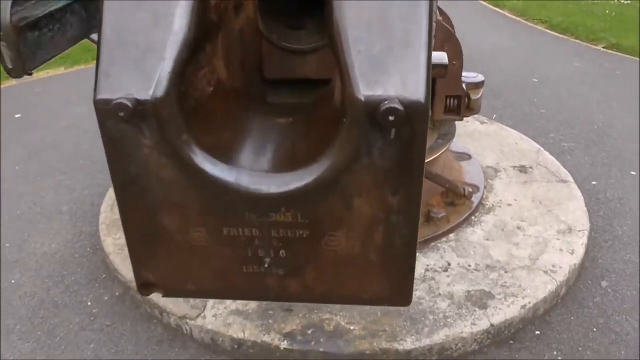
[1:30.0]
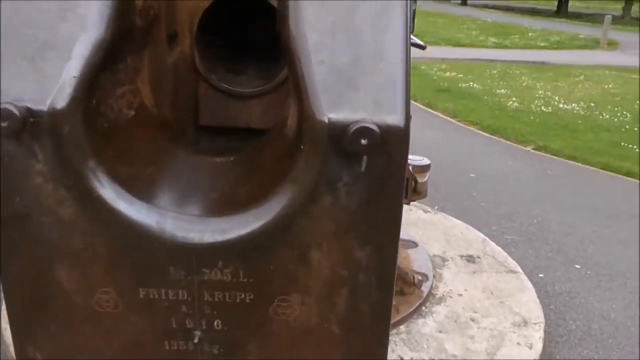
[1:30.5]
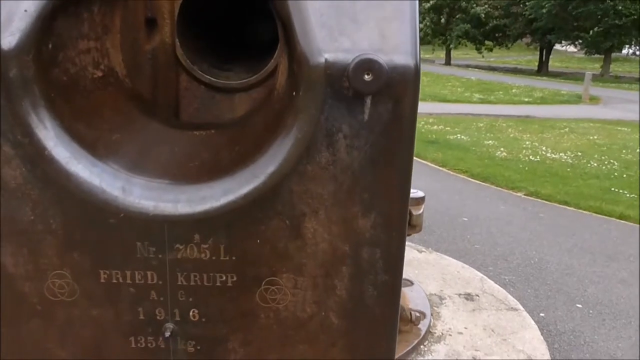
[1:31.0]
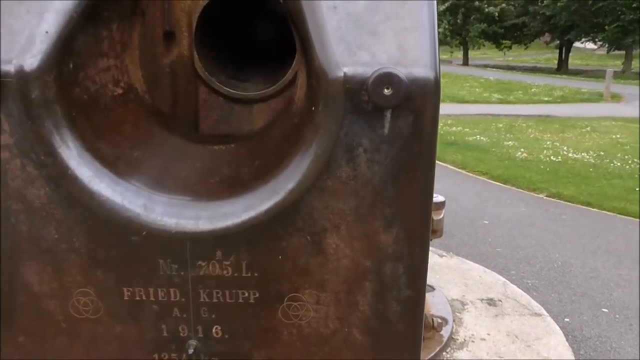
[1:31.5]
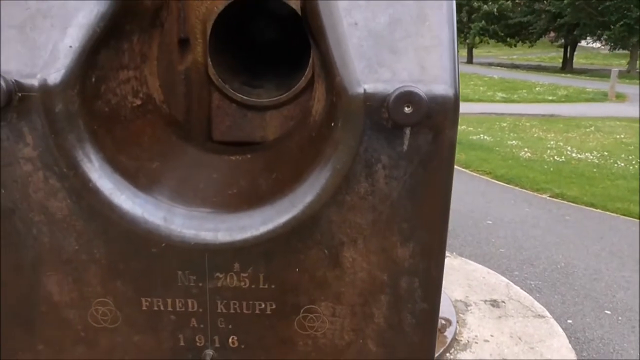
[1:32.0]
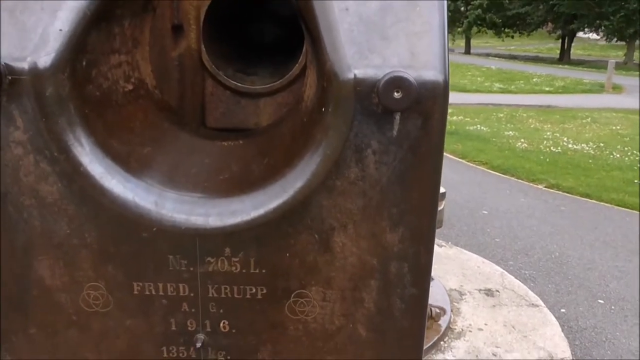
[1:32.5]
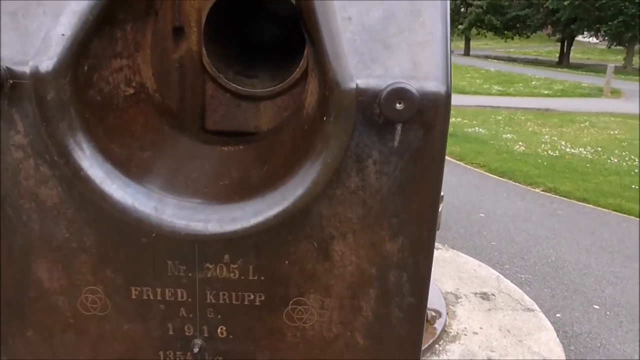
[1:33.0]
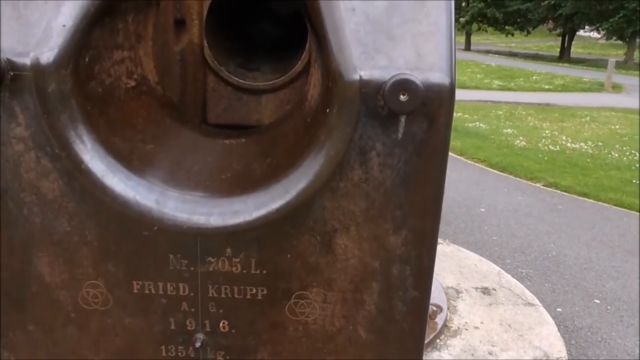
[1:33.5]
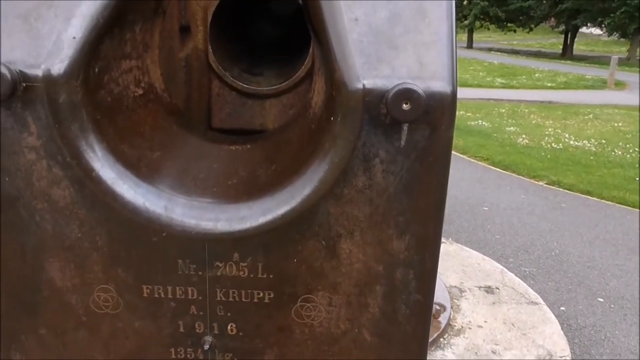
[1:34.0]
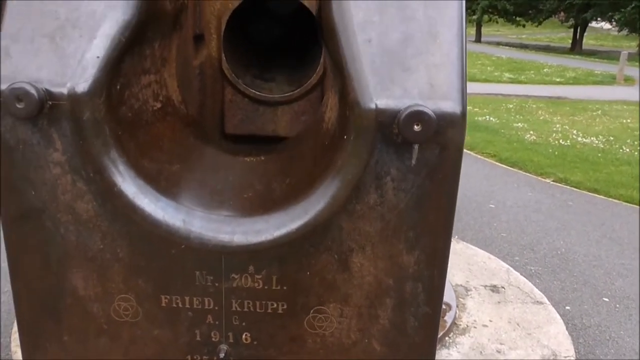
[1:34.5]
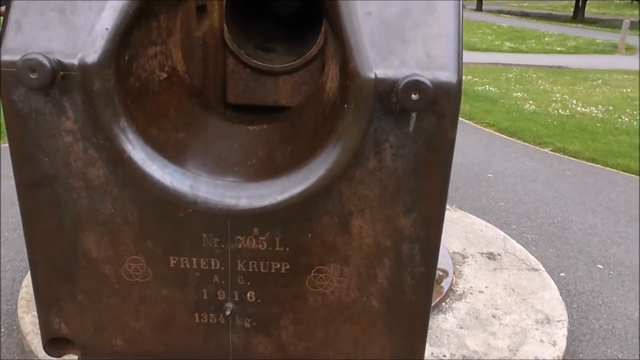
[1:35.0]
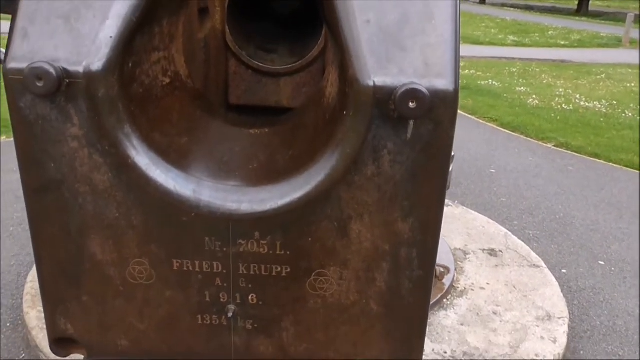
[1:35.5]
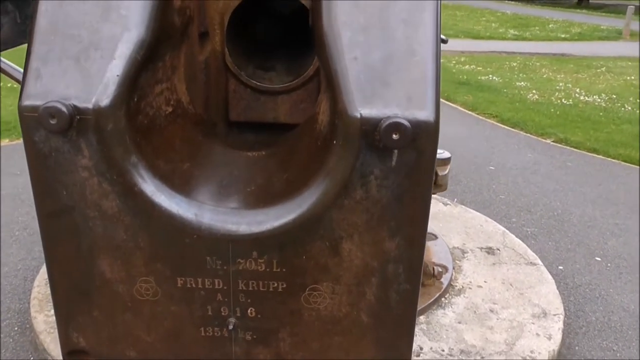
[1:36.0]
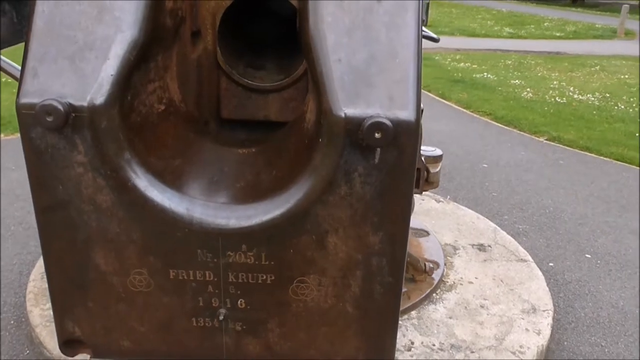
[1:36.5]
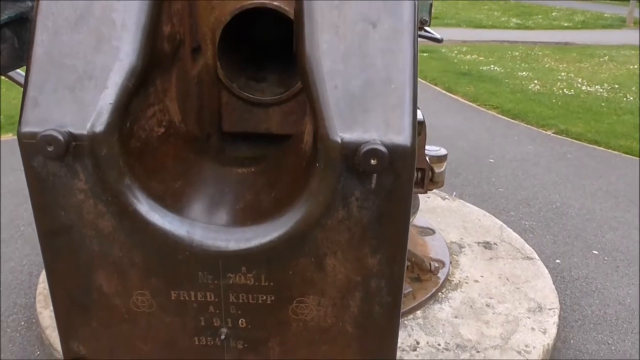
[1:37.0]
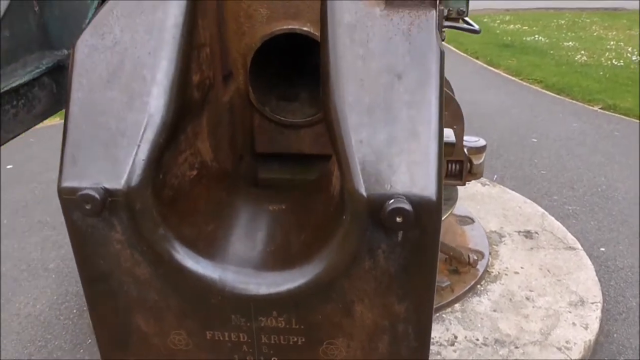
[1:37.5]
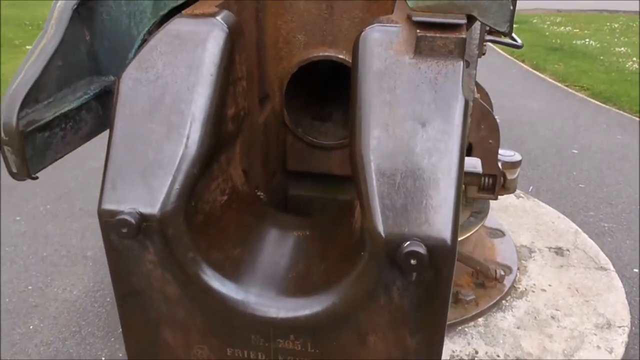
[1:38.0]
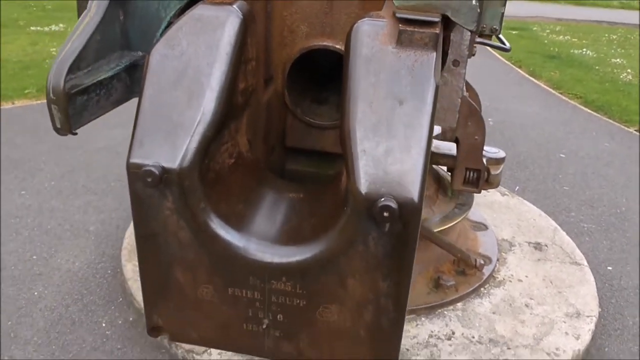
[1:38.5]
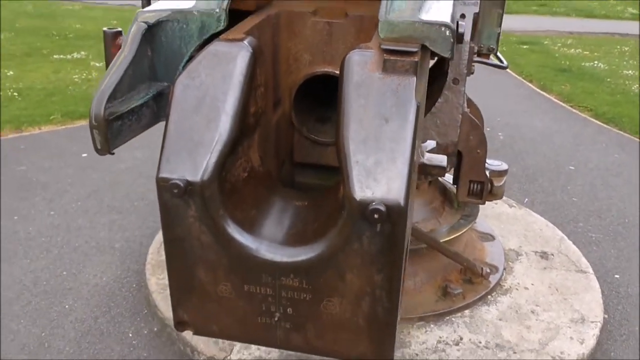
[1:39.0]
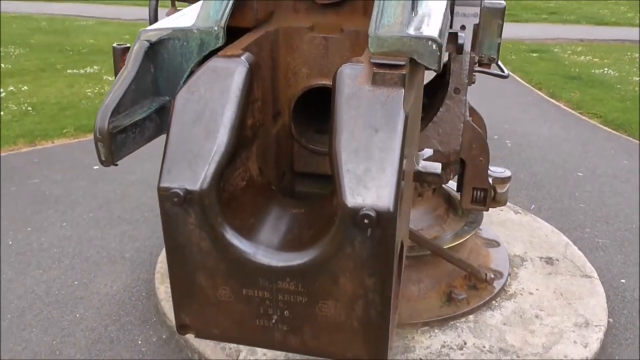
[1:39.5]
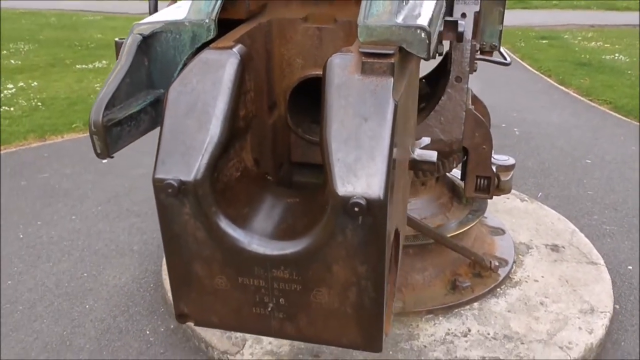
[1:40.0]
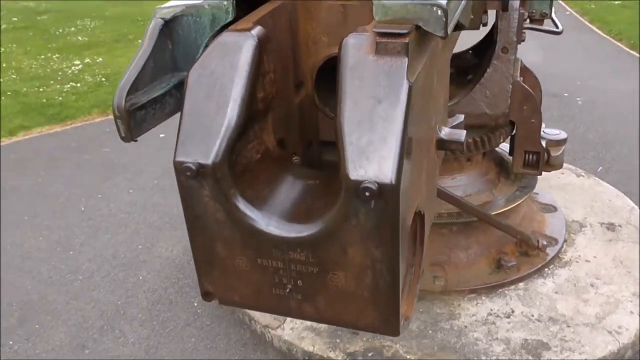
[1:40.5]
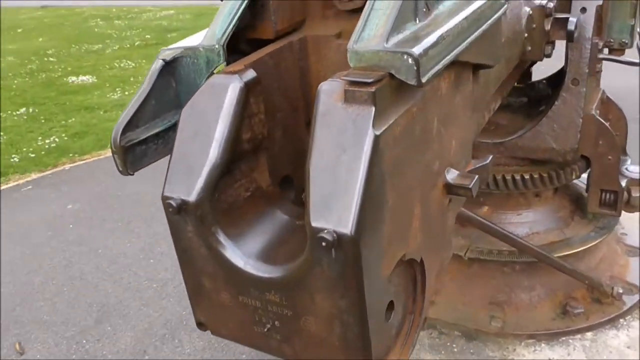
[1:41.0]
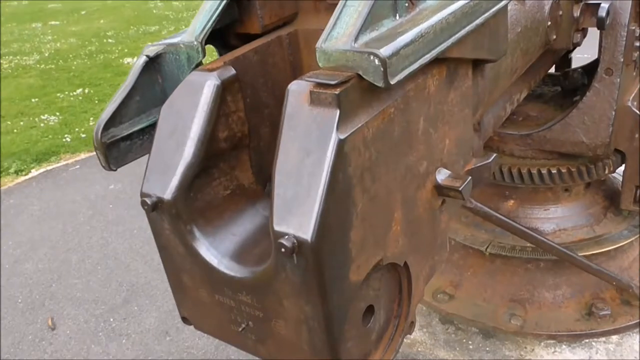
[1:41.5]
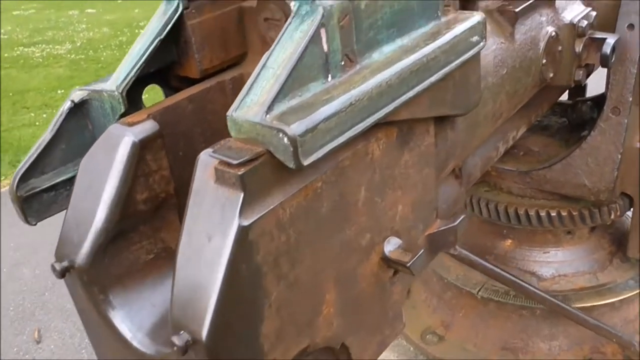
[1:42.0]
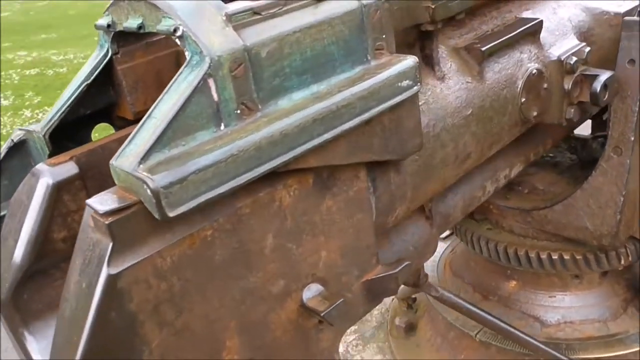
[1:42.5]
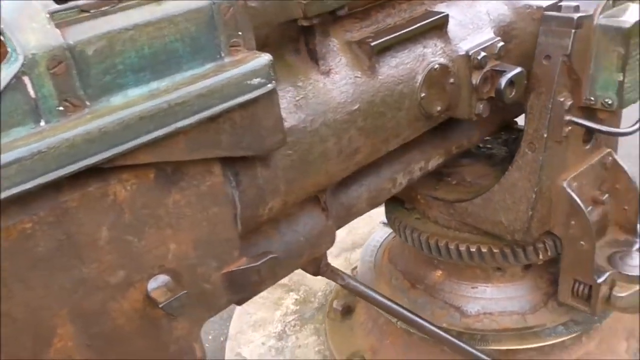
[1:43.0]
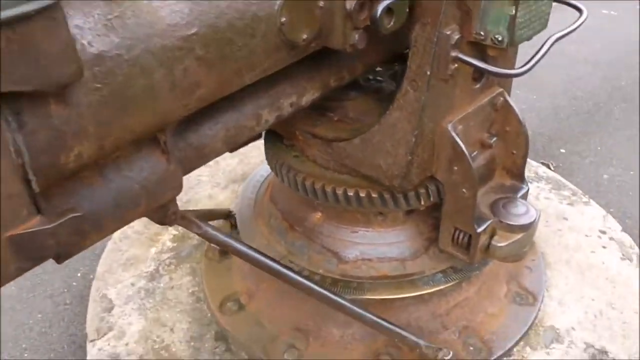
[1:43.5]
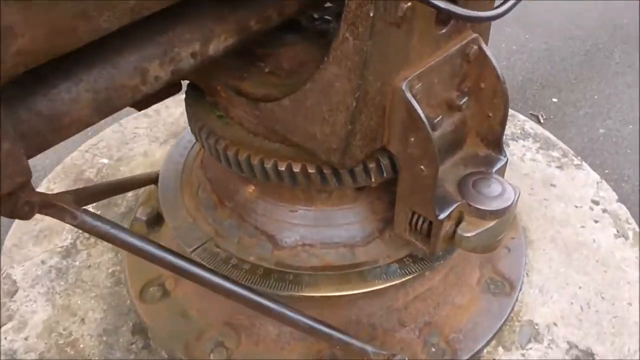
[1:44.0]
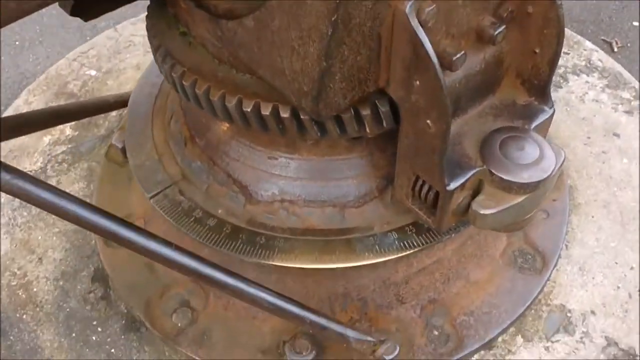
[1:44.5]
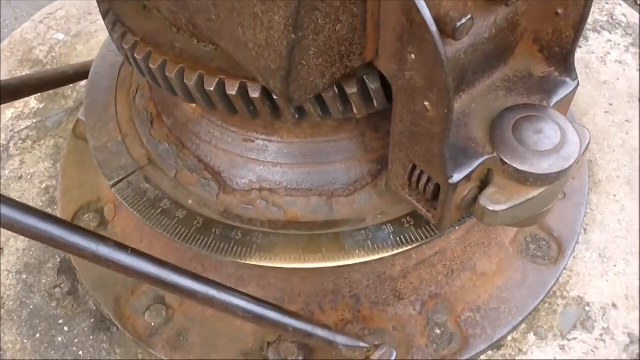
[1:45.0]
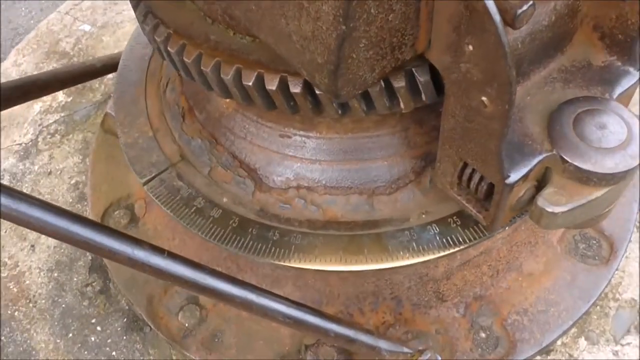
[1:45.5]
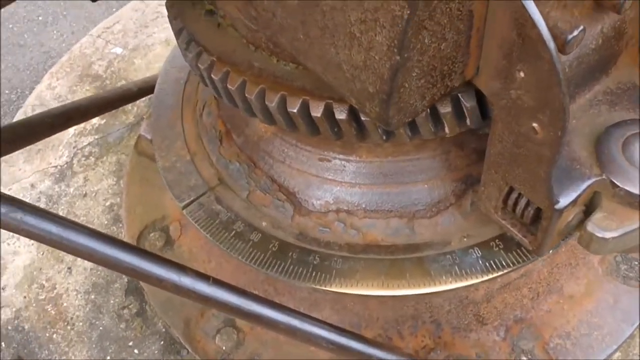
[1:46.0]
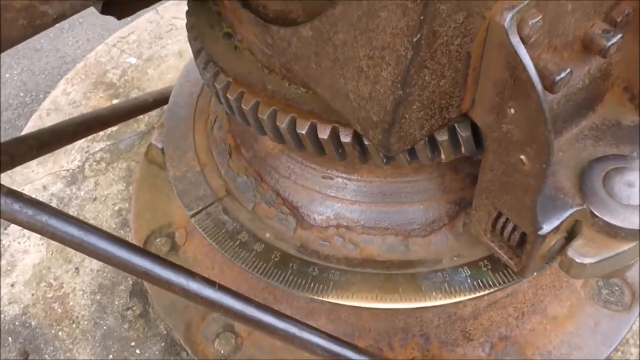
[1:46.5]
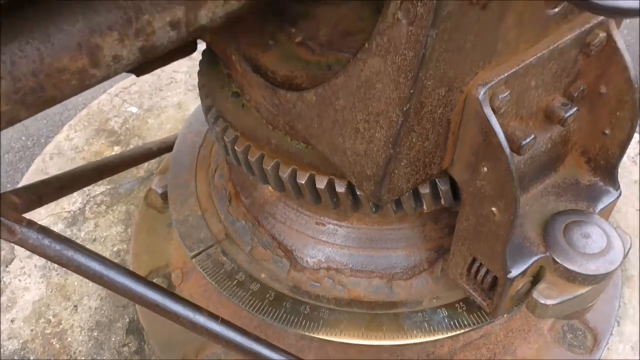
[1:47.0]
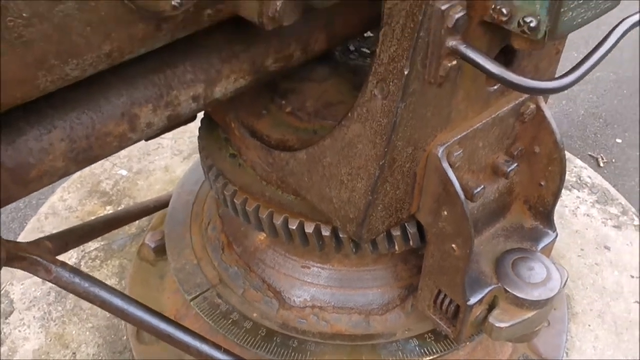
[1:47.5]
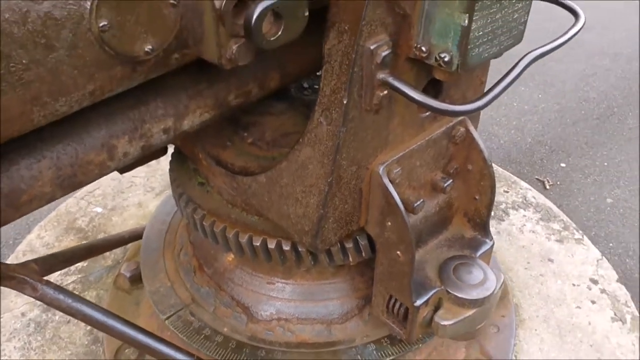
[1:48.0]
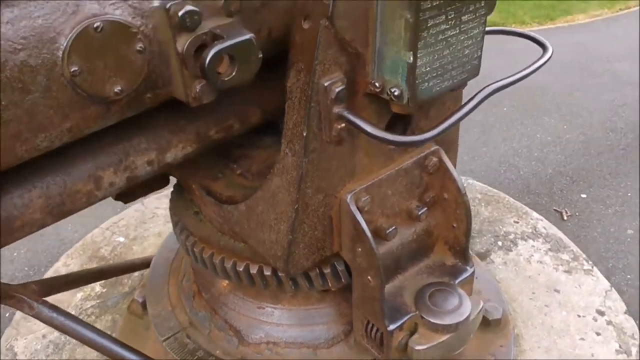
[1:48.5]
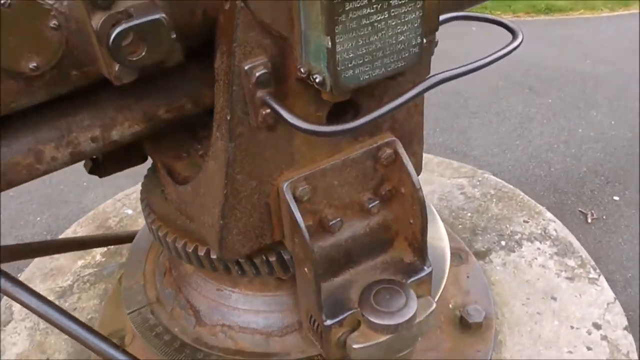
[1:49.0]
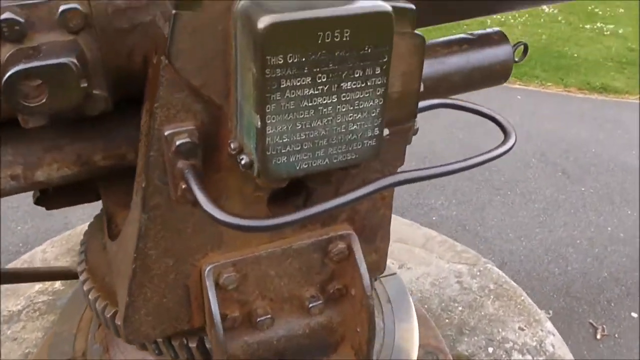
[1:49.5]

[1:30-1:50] A close-up shows the back of an artillery gun, and the camera pulls in close to the channel or circle where the artillery was inserted. At the bottom, an inscription on the metal reads "Nr. 705L Fried Krupp, A.G. 1916, 1354 kg." The metal looks copper or bronze. The camera then moves to the base of the gun, where there is what looks like a cog with crenelated edges, and something that looks like a dial with measurements marked on it like a ruler. The camera pulls up again to show a plaque on the side of the gun with a long inscription. Part of the inscription is obscured as though the paint has rubbed off, but much of it at the bottom is still readable.